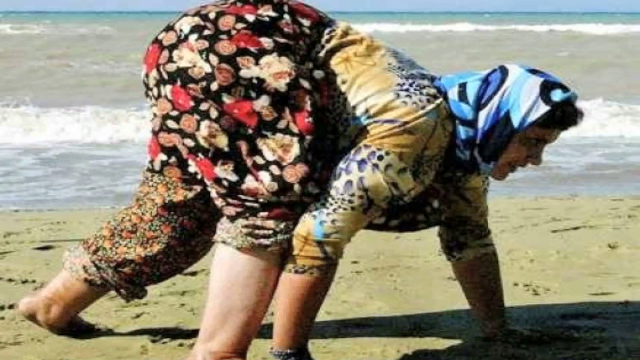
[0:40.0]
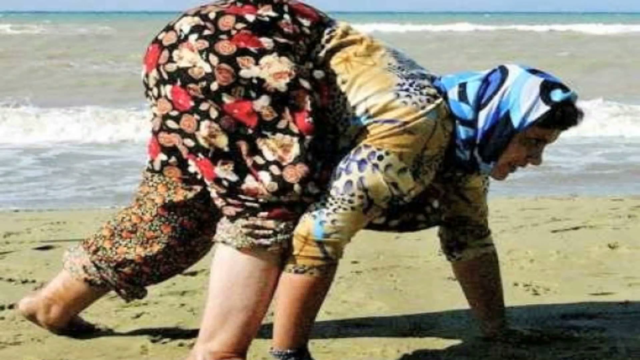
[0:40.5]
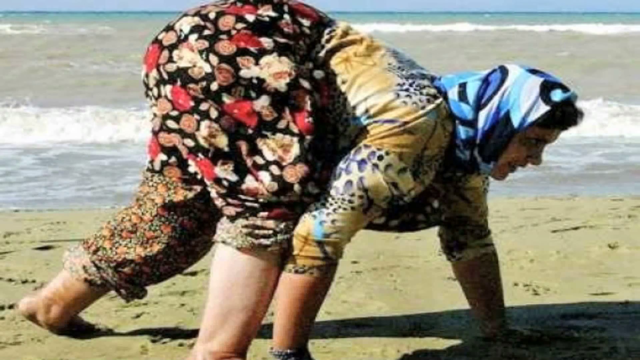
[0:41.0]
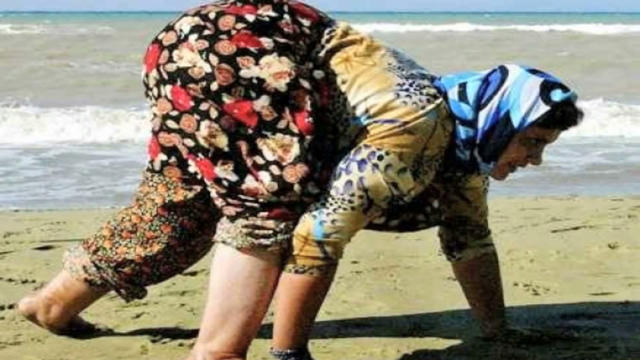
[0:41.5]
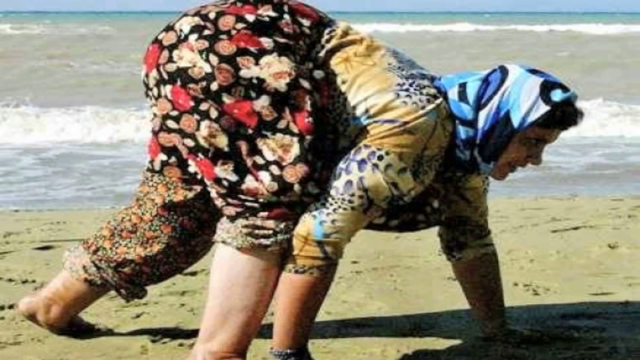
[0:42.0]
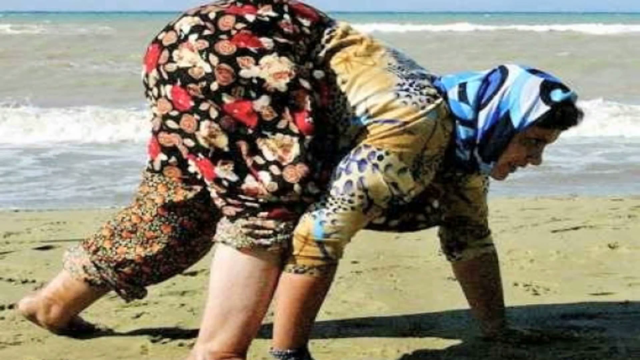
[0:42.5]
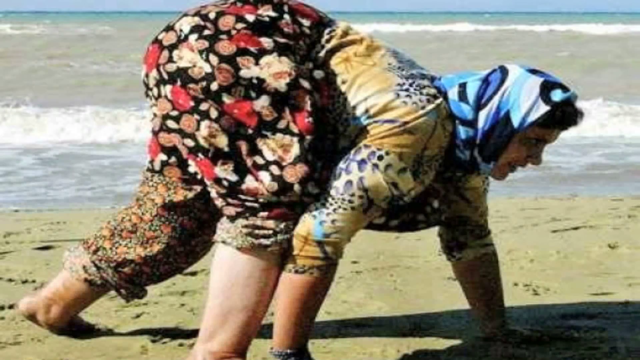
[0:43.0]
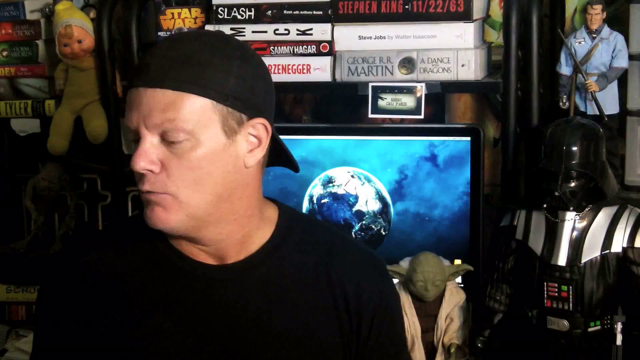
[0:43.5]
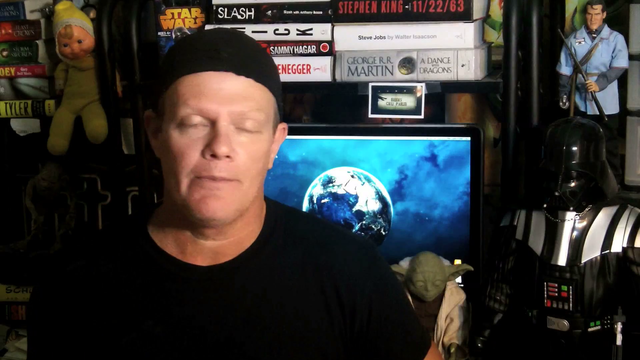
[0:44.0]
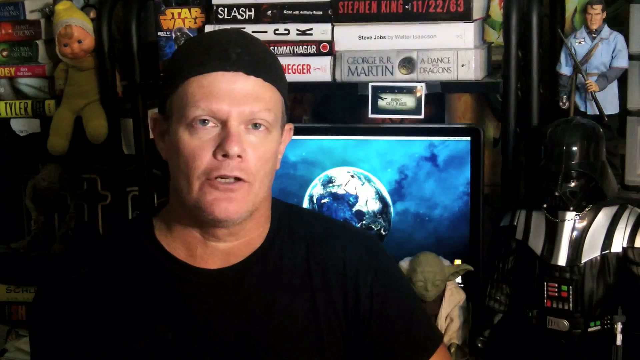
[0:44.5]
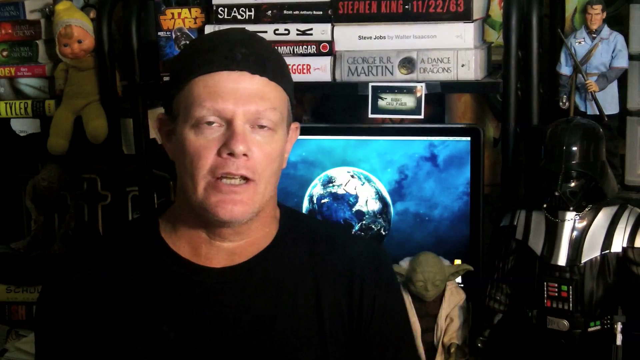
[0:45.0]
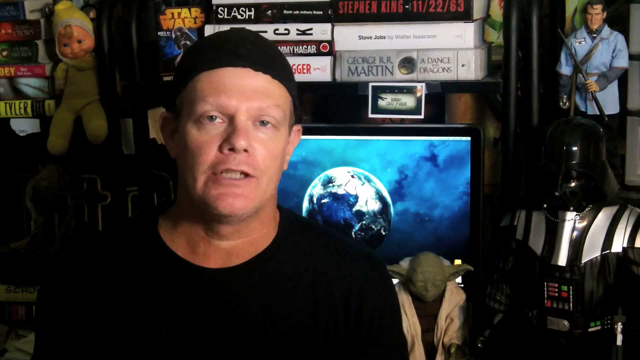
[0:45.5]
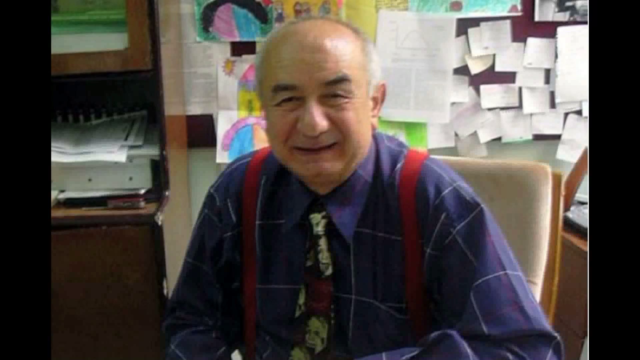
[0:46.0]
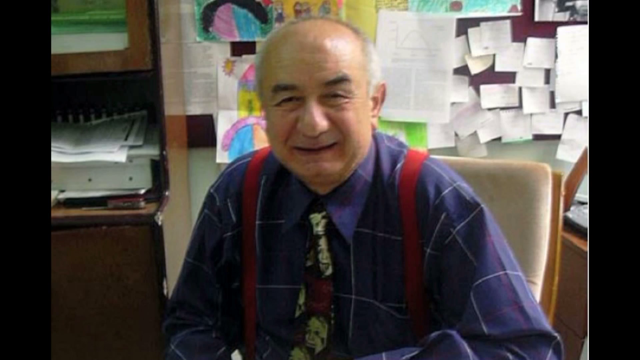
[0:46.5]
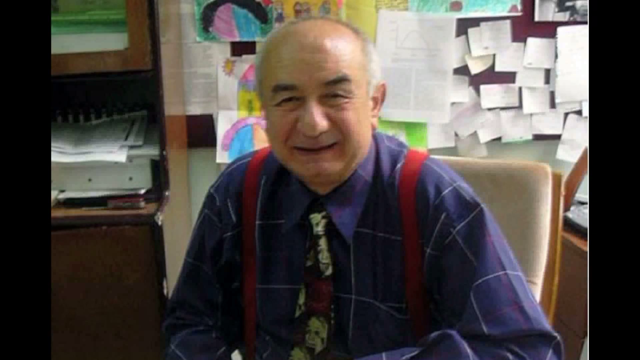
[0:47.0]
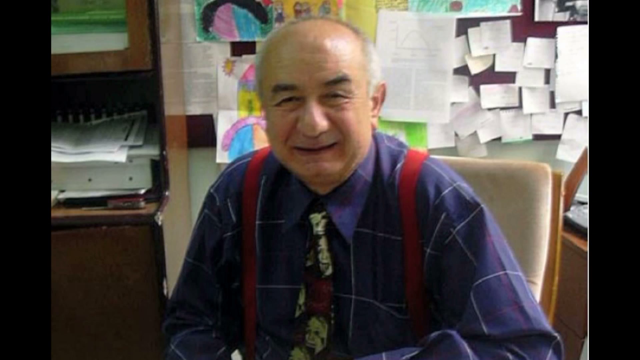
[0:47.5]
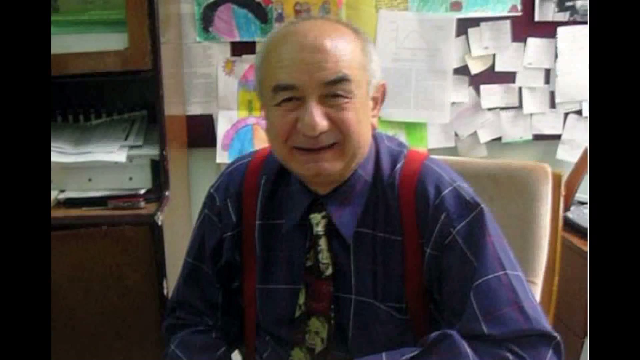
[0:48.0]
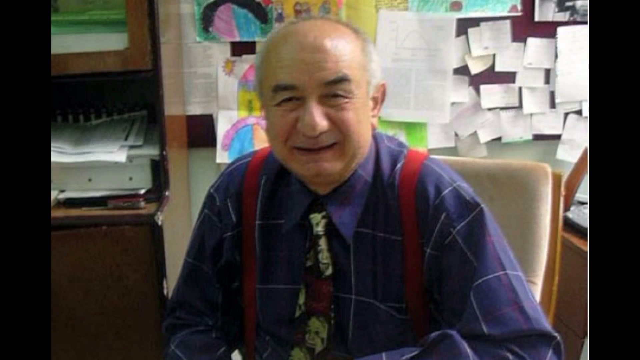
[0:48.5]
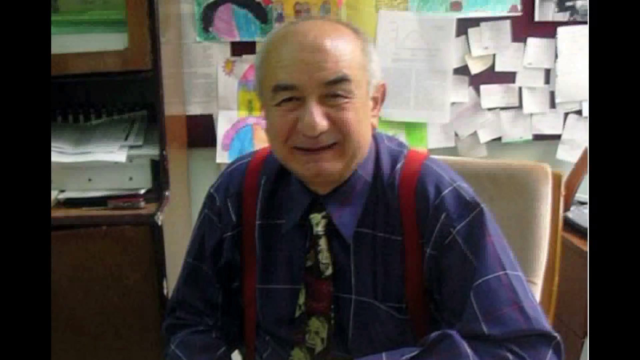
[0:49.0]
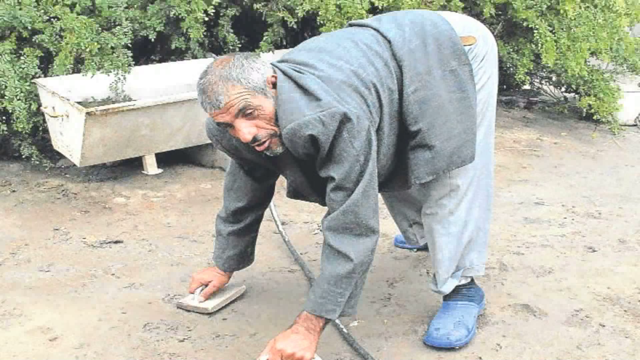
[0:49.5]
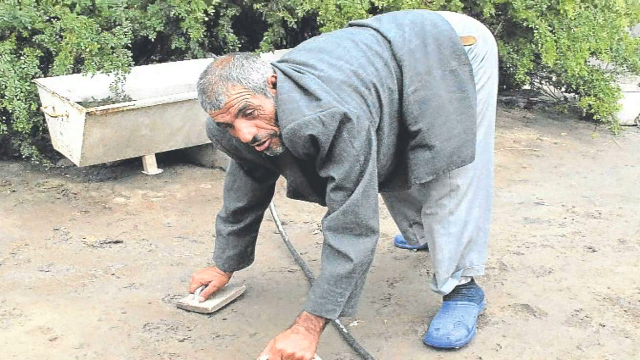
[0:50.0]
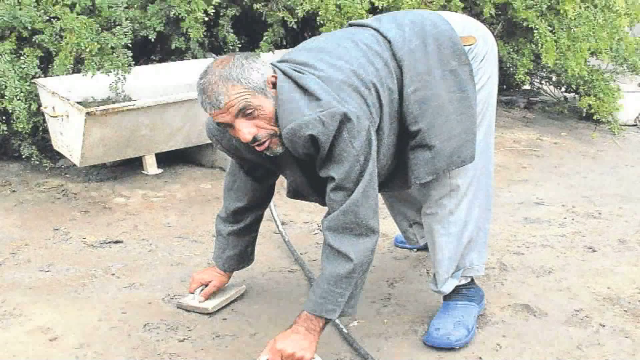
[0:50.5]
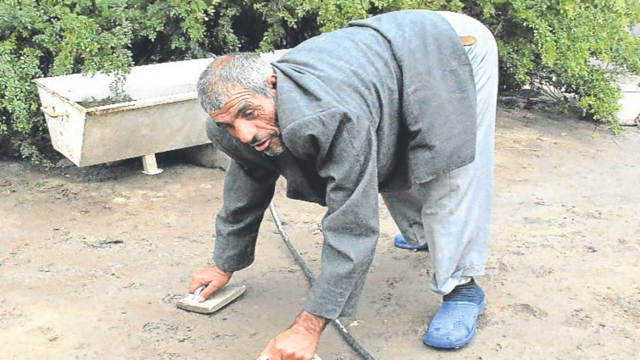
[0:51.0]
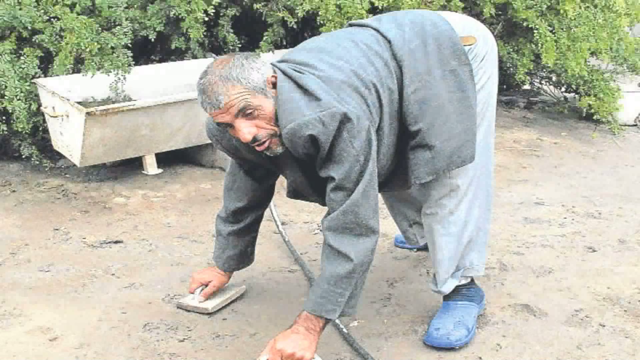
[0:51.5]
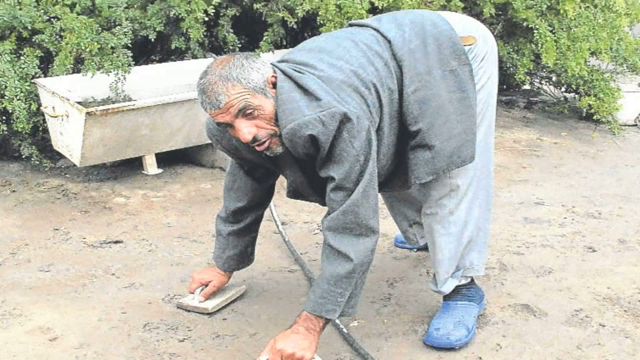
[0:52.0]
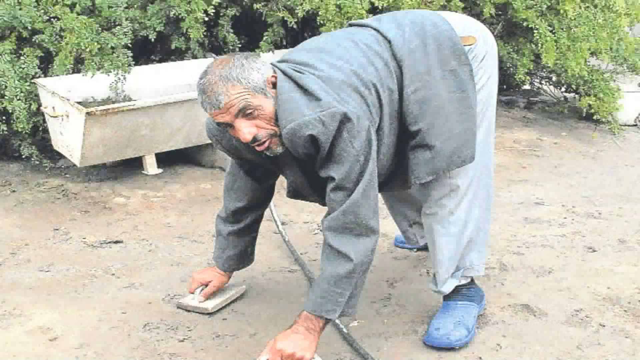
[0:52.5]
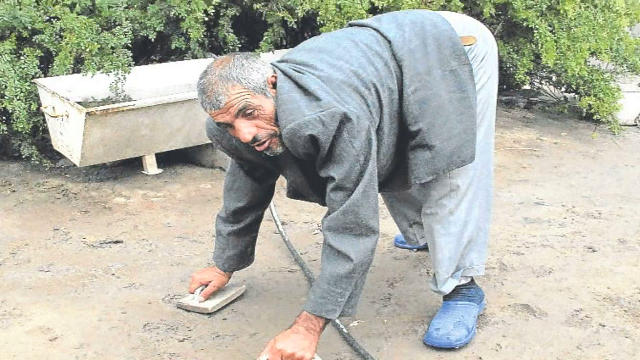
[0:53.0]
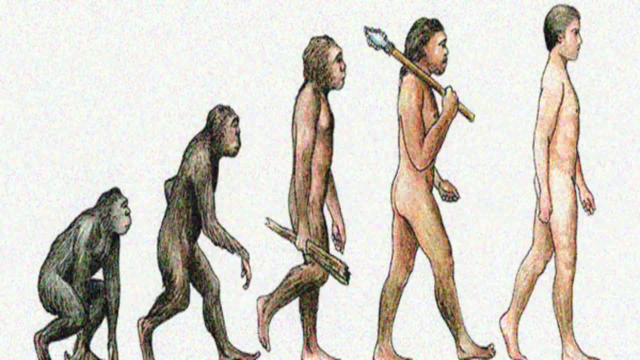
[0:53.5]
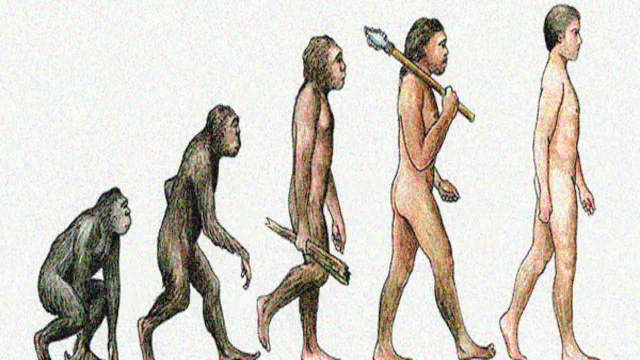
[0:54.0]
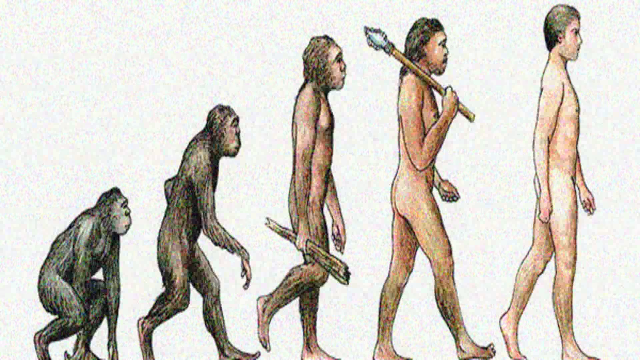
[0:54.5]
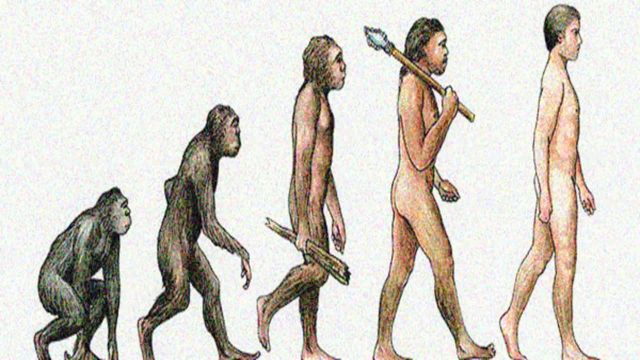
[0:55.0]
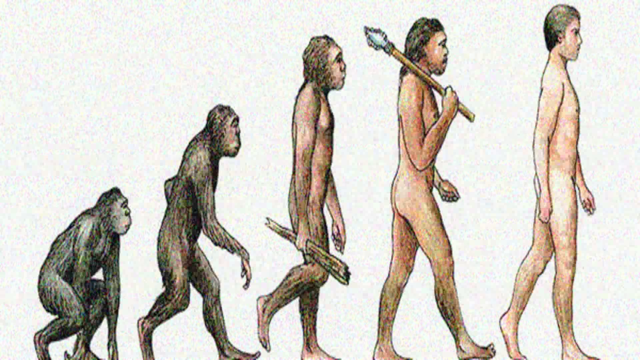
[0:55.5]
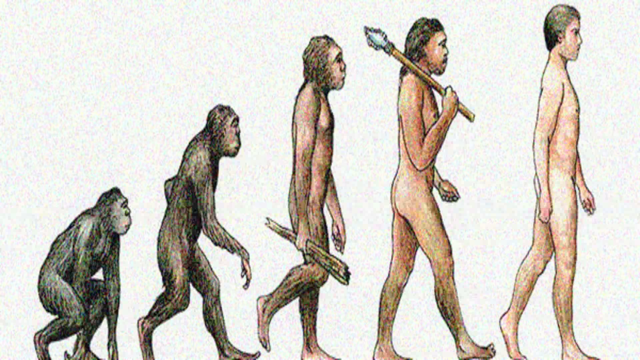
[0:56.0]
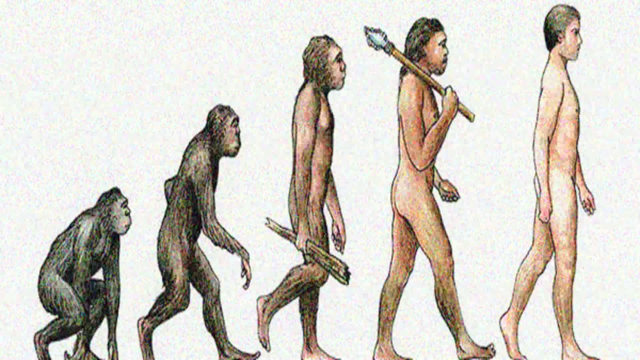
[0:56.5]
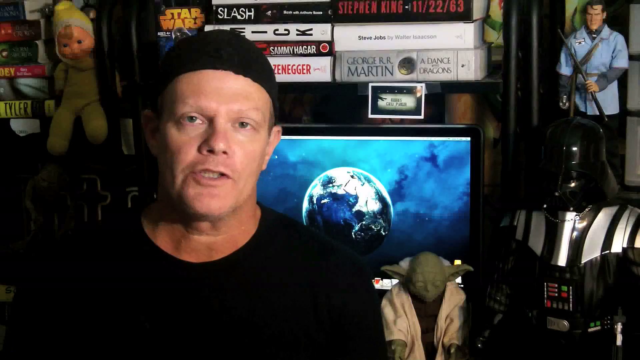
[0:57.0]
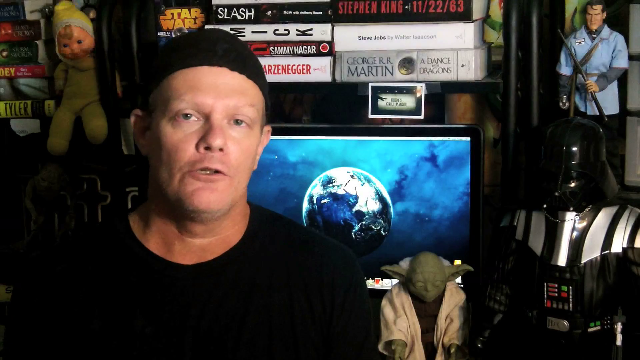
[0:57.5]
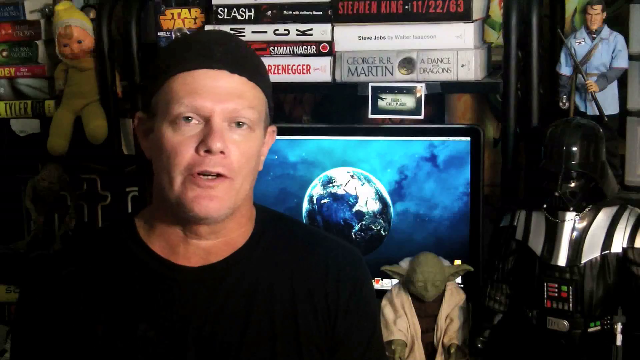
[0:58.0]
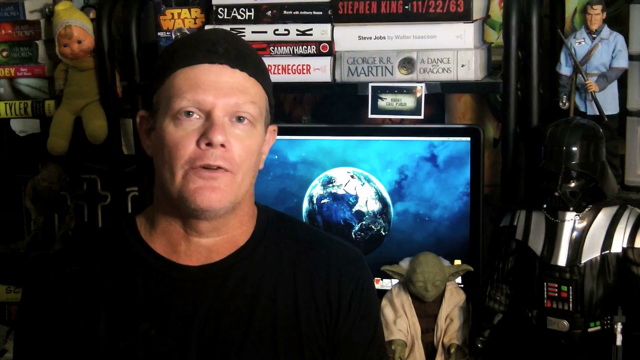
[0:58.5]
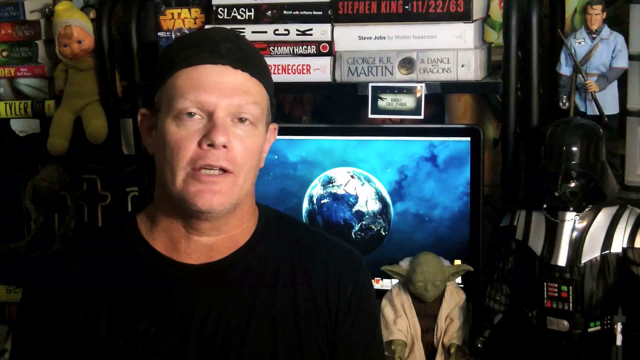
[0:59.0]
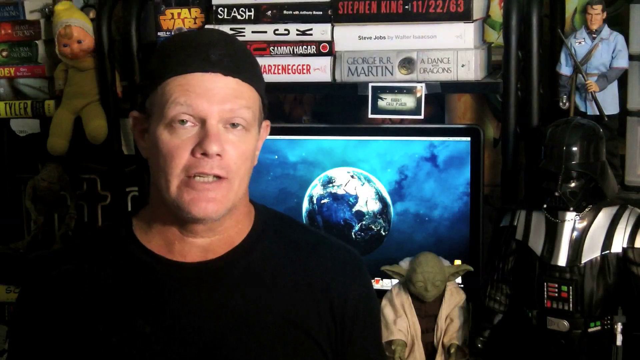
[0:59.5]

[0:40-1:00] A woman walks like a rat, her arms and hands walking on the ground. She wears some kind of weird dresses and a blue hat or bandana, and she goes into some kind of slum. A man is shown in his room wearing a blue hat and a t-shirt; behind him is a TV screen with an earth globe, a Darth Vader and some other figures, and a lot of DVDs and books, along with some toys and weird things. Then a picture of an older man in a purple outfit with a bow appears, followed by another man standing with his hands, and then an image of evolution from a monkey to a human.